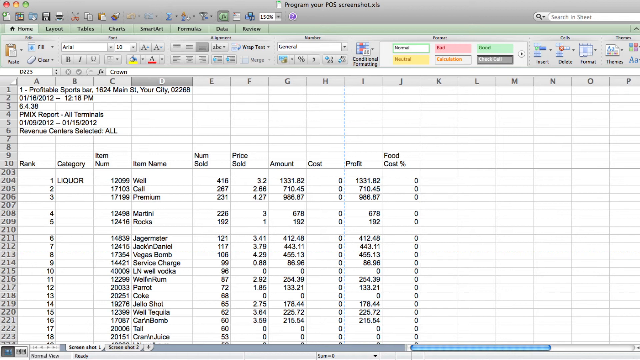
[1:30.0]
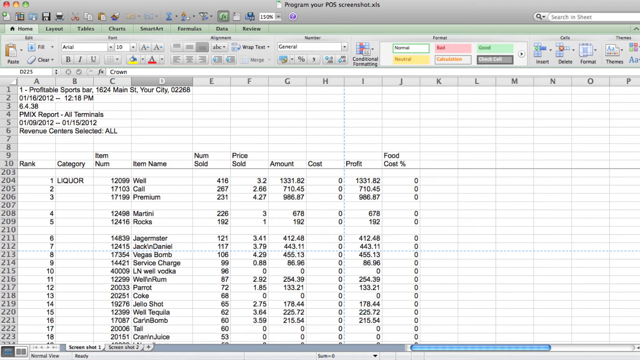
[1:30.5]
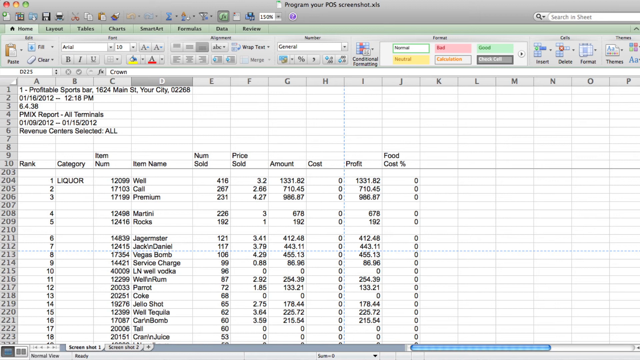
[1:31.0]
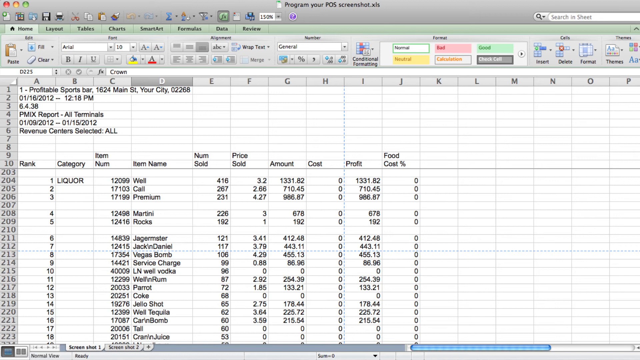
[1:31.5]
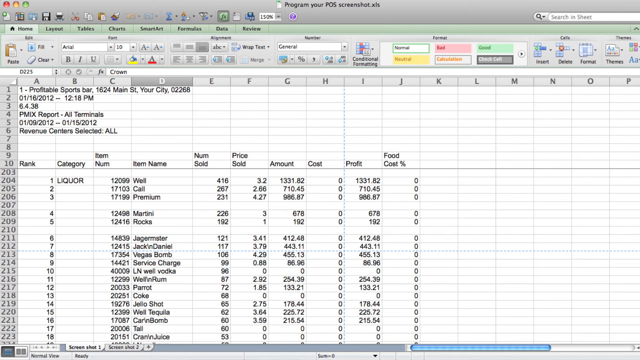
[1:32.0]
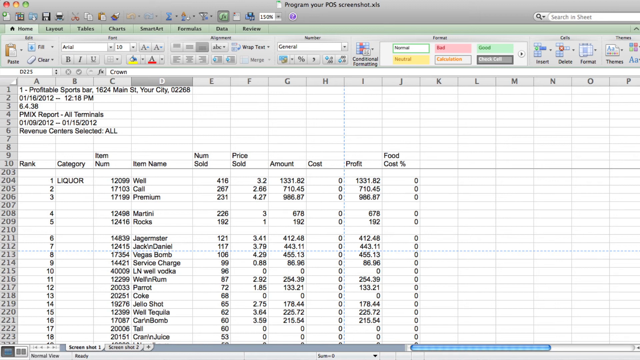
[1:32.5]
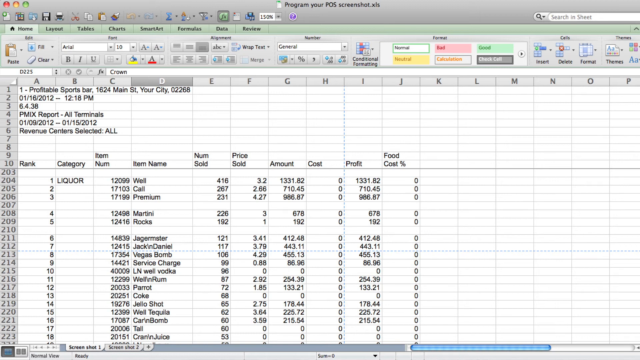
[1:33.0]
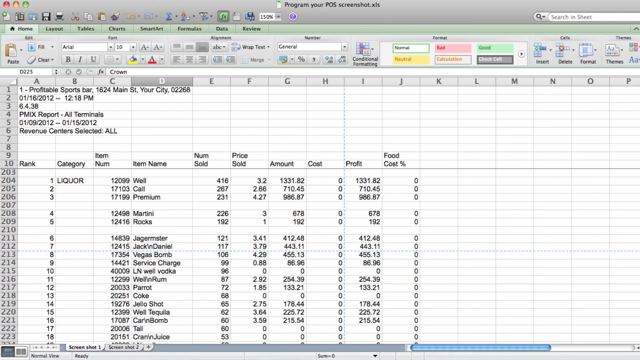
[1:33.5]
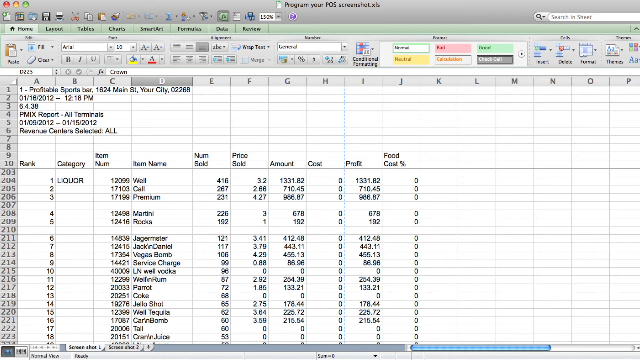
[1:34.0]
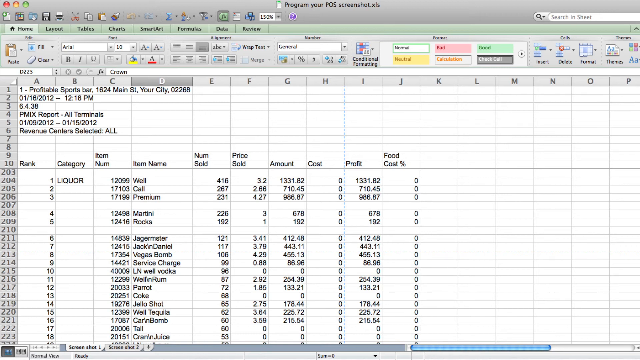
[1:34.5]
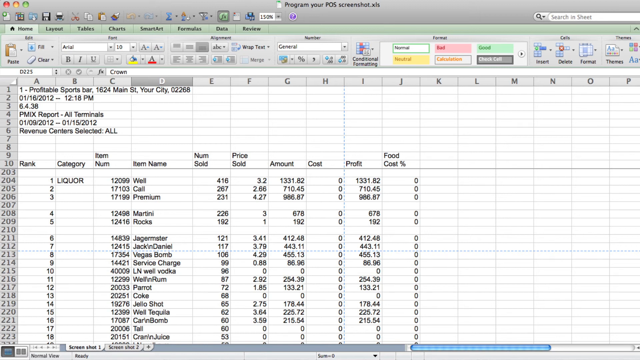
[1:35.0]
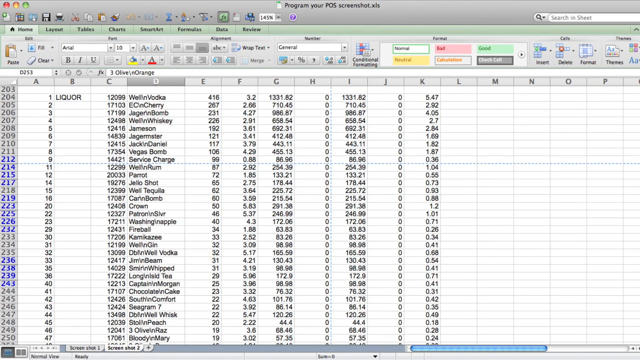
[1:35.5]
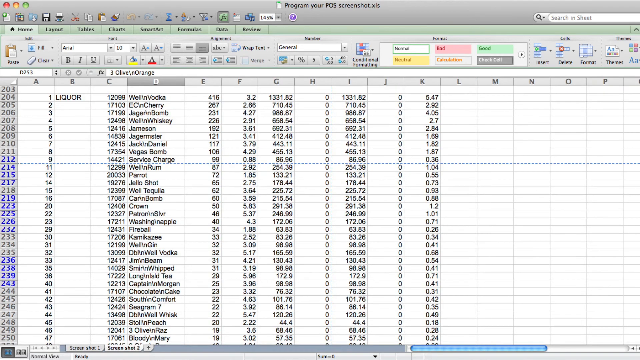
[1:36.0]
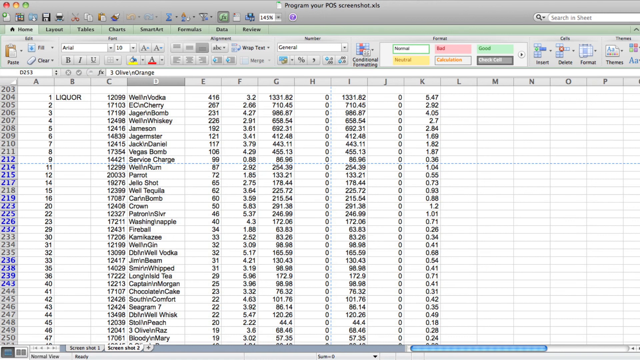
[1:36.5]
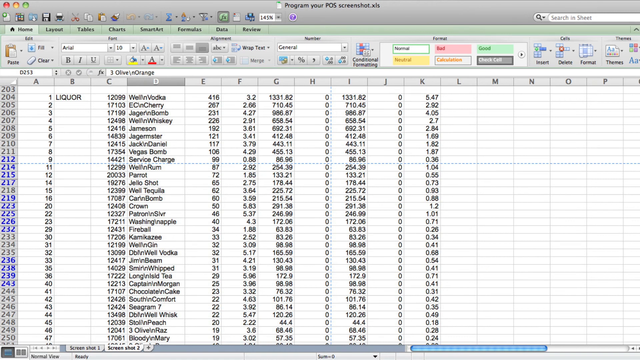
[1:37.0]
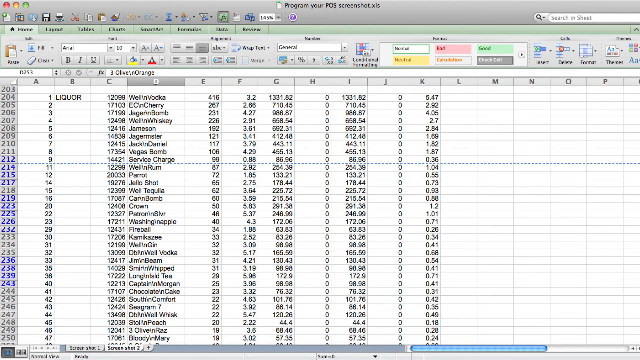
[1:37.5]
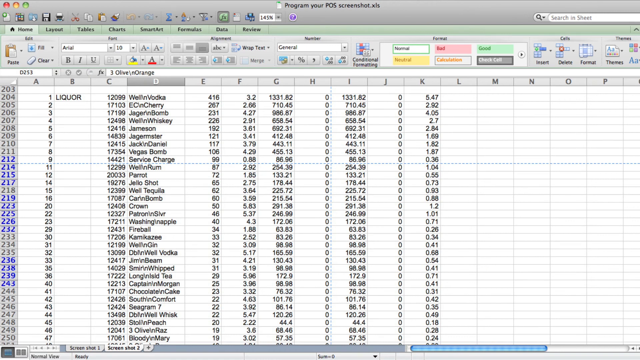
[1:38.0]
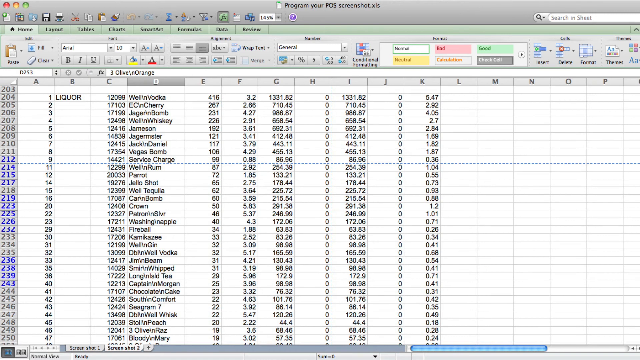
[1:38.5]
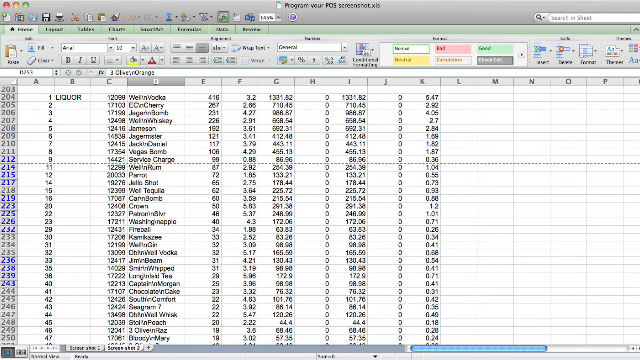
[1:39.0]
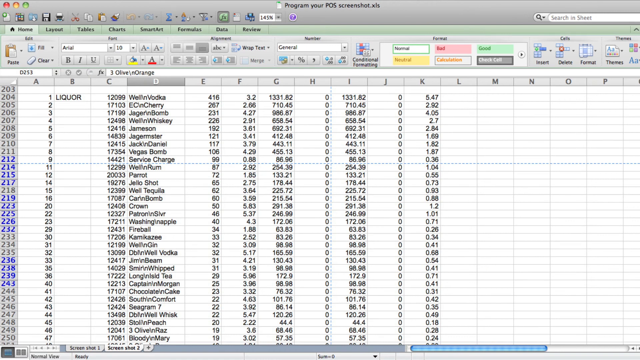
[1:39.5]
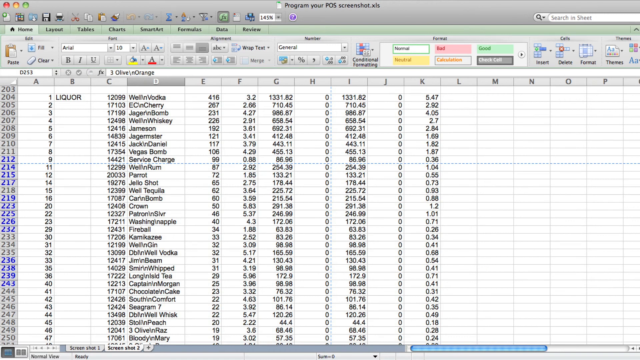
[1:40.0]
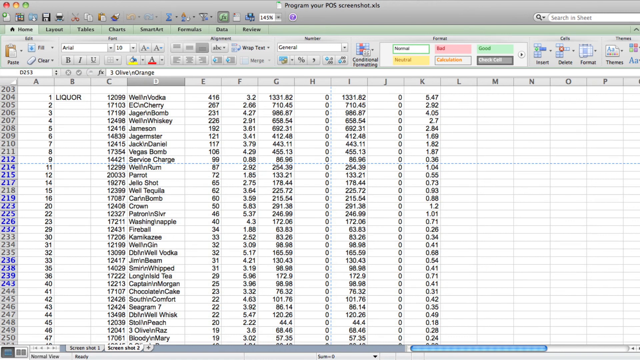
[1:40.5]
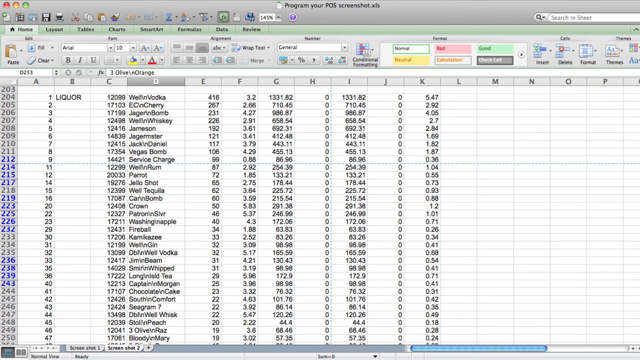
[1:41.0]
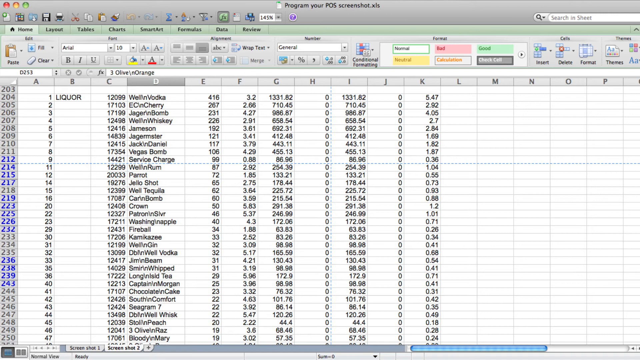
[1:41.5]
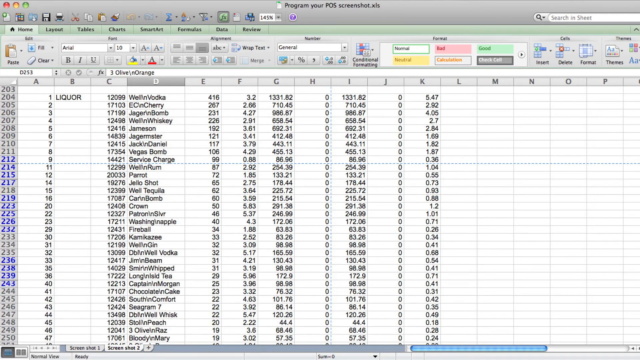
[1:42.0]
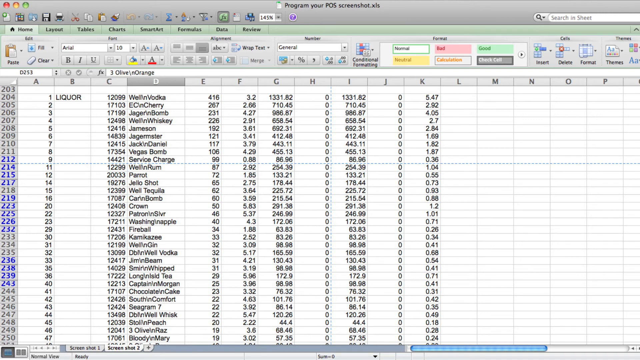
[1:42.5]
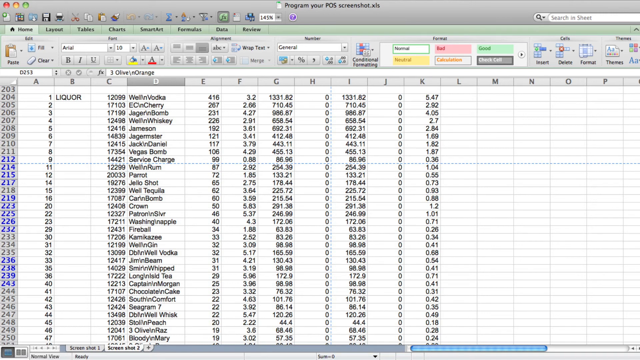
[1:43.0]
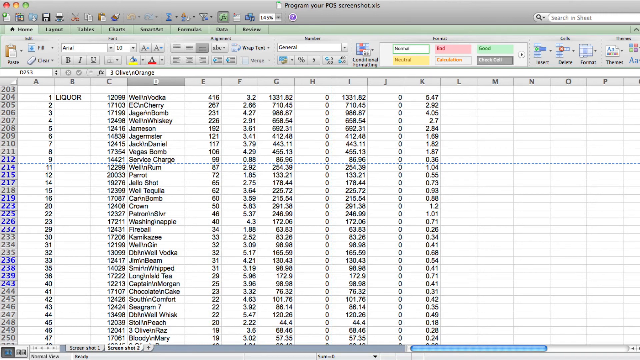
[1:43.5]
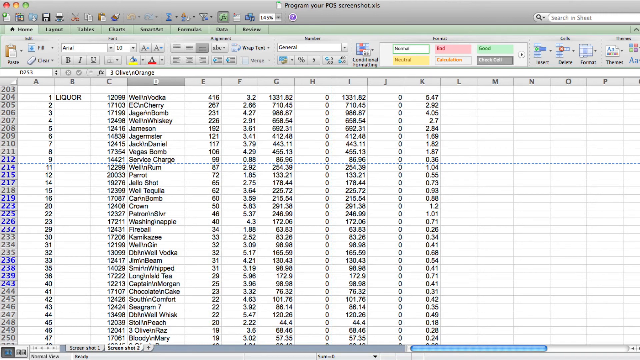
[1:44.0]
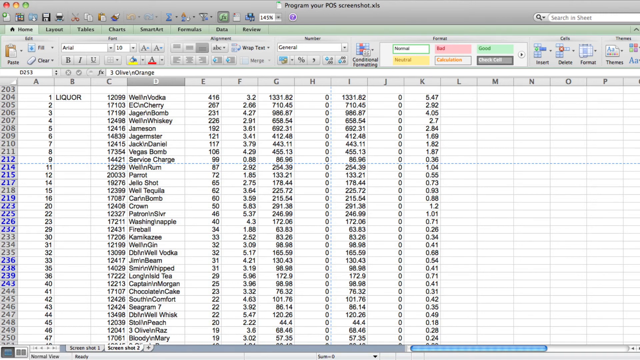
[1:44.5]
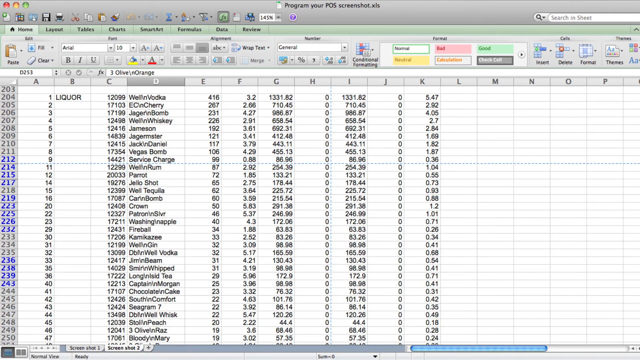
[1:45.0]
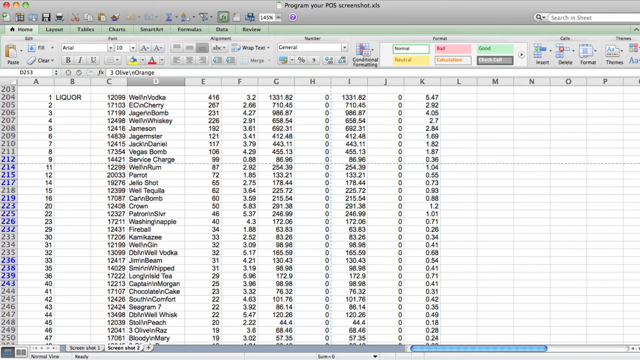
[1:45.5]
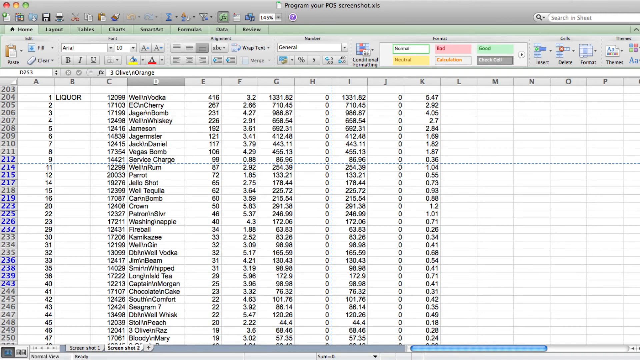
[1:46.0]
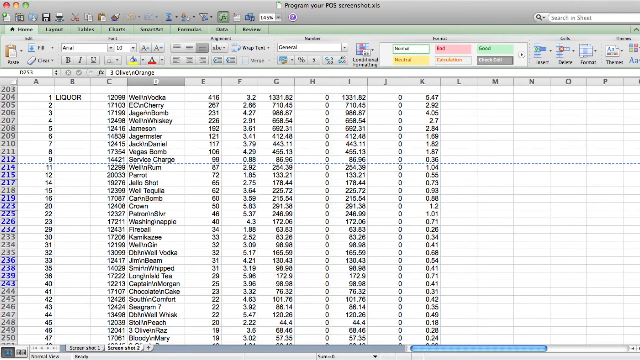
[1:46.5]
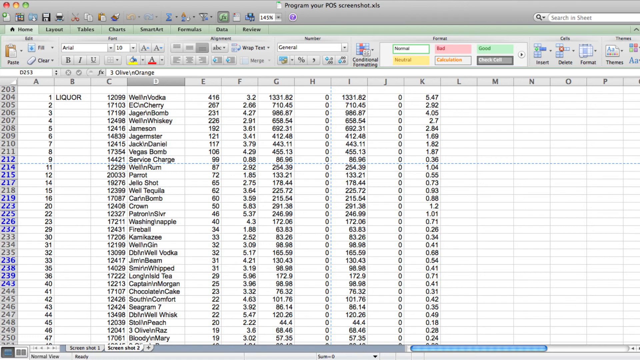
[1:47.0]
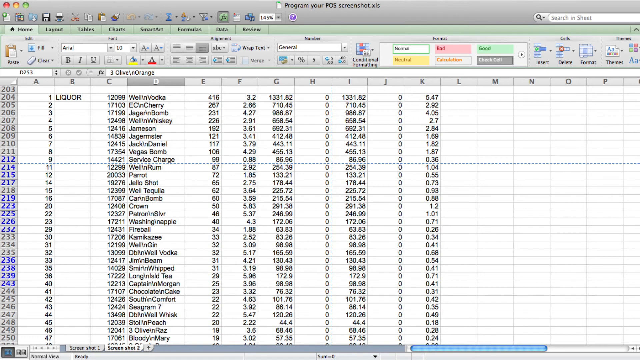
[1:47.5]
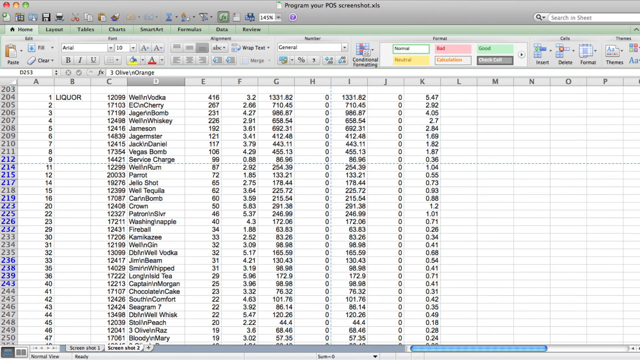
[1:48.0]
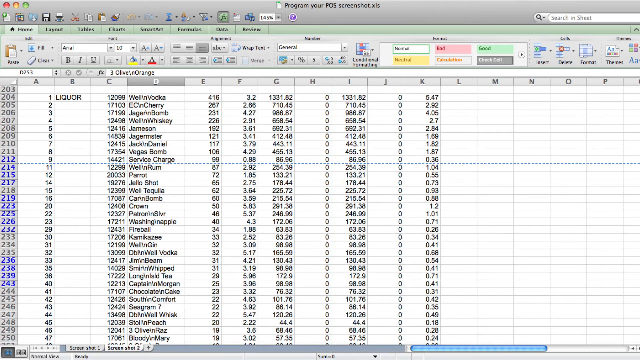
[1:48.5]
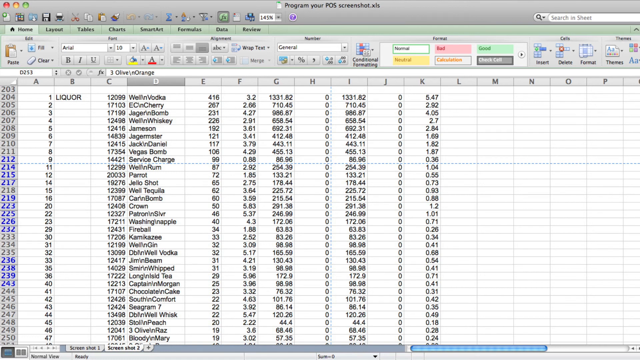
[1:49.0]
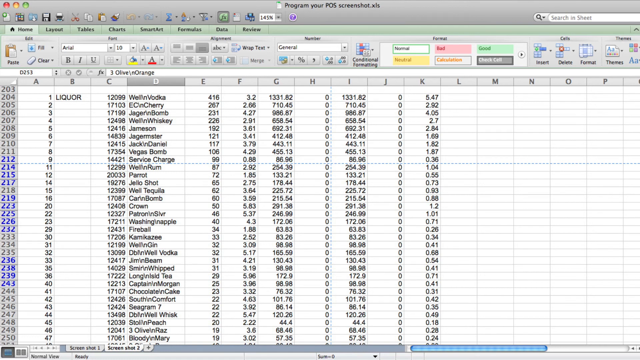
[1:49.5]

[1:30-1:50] The spreadsheet shows a "profitable sports bar" report of items sold, with a time period, the revenue centers, and columns for rank, category (such as liquor), item number, item name, number sold, price of the item sold, amount, cost, profit and food cost percentage. Under the columns are names, whether an item is premium or well liquor, figures such as $4.16 and a price such as $3.02, and the profit percentage. The view scrolls down to show service charges, mixed drinks such as kamikaze, well tequila and a jello shot, more premium names such as Southern Comfort, and specialty drinks created by the bar such as Vegas Bomb.